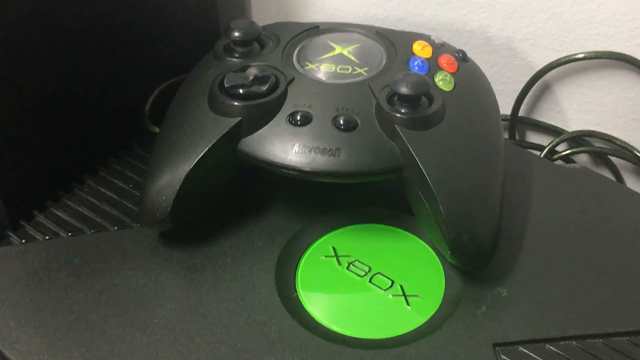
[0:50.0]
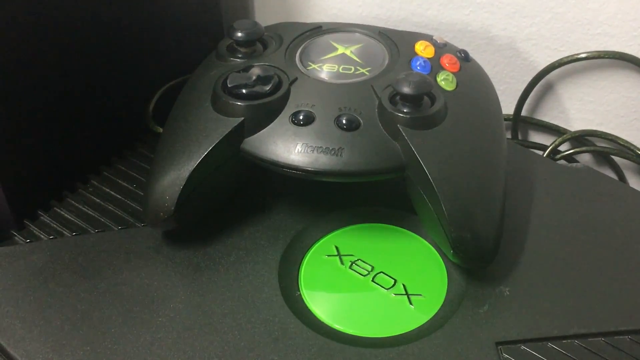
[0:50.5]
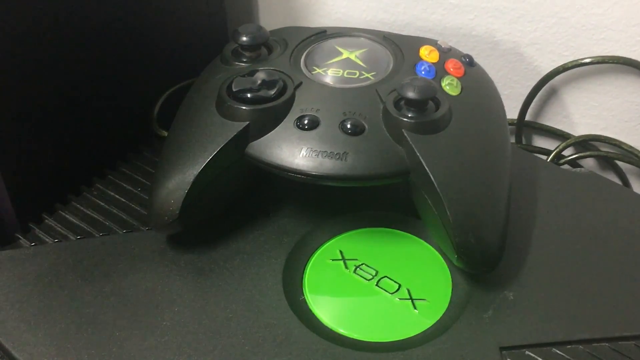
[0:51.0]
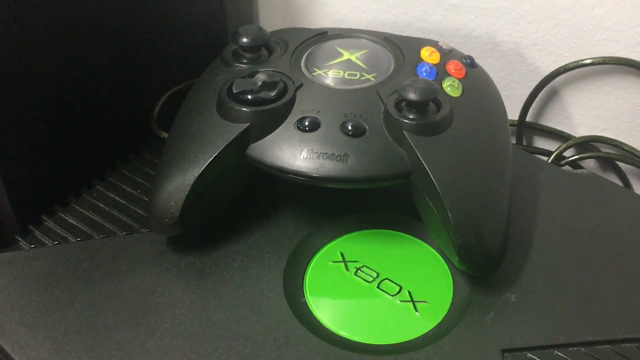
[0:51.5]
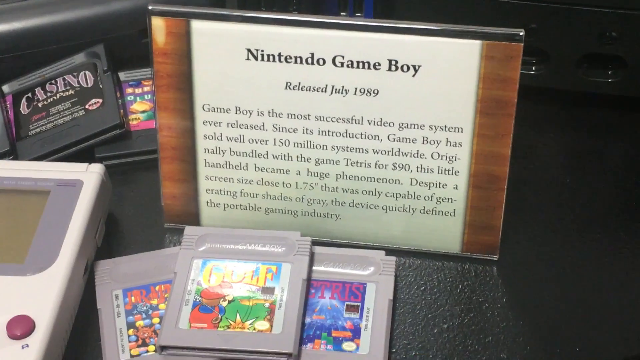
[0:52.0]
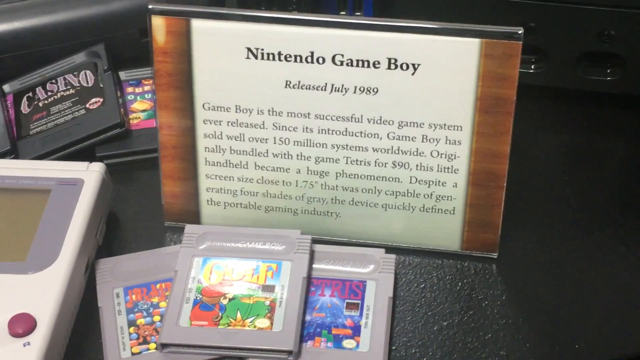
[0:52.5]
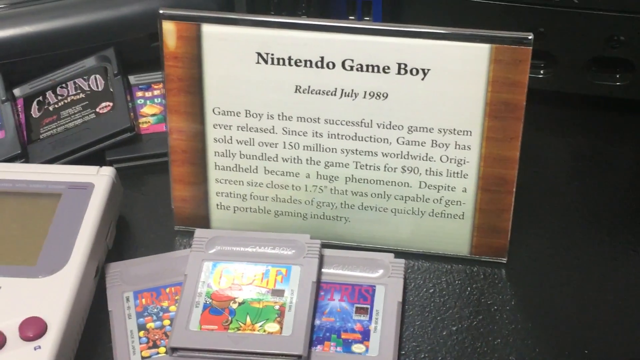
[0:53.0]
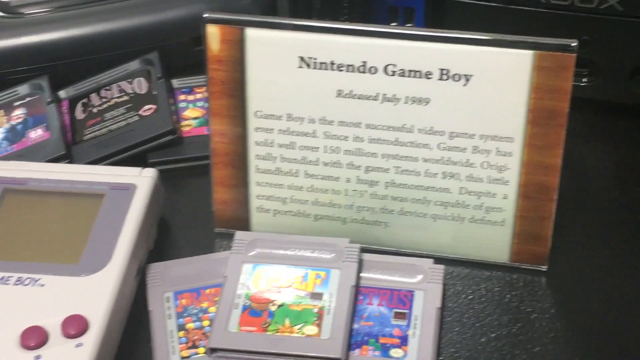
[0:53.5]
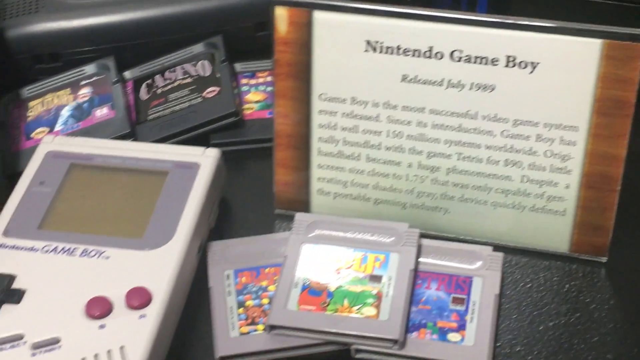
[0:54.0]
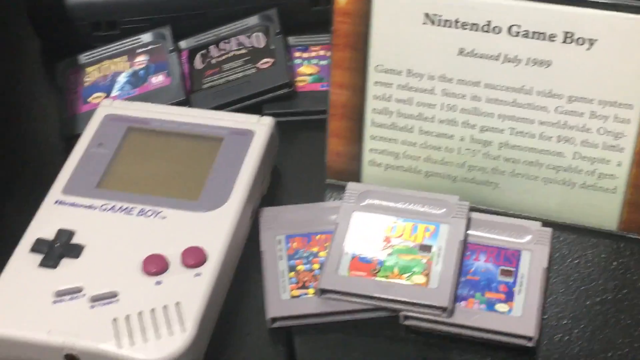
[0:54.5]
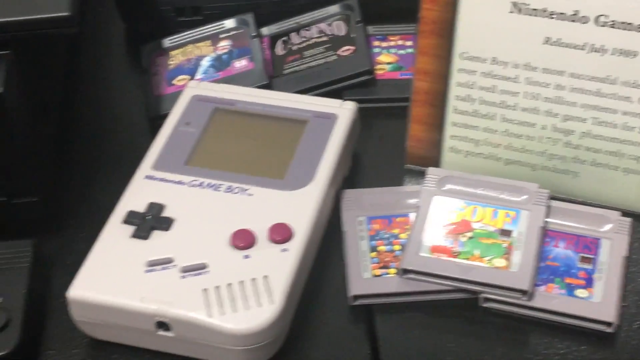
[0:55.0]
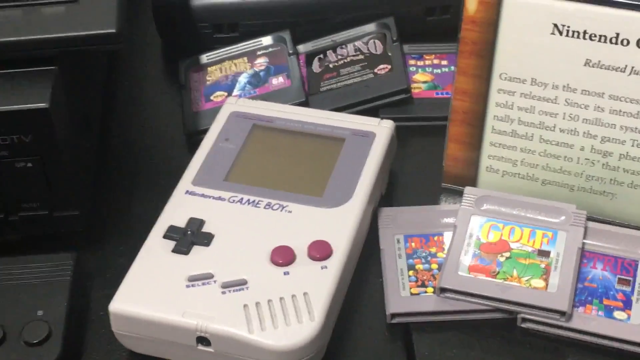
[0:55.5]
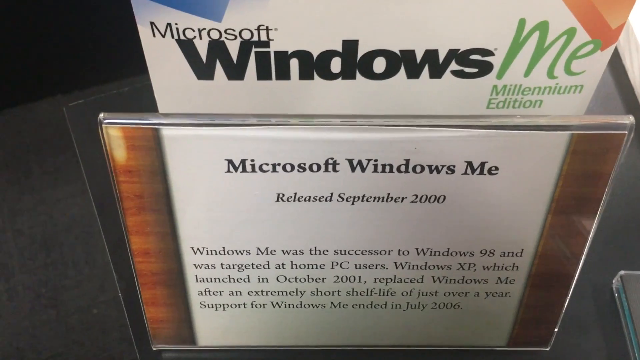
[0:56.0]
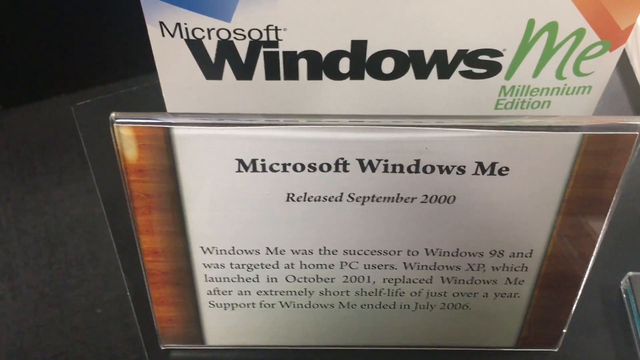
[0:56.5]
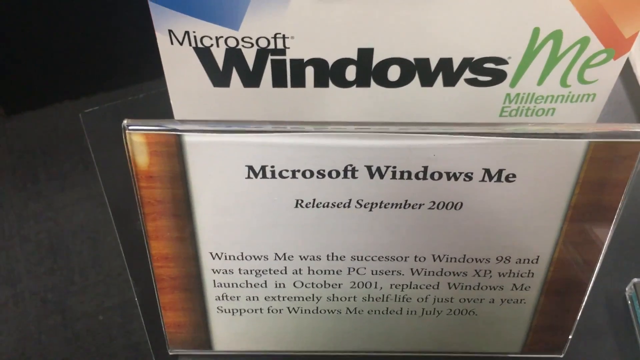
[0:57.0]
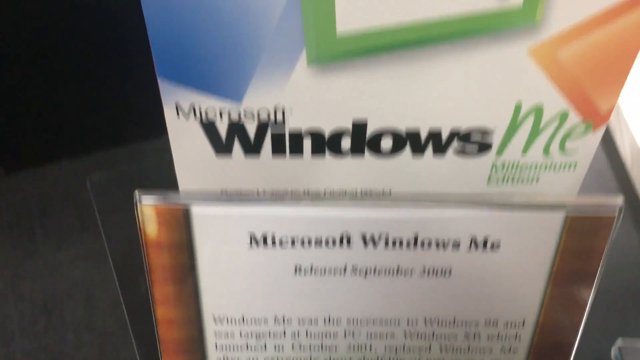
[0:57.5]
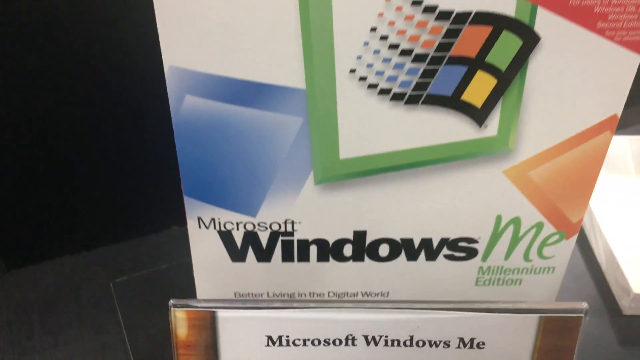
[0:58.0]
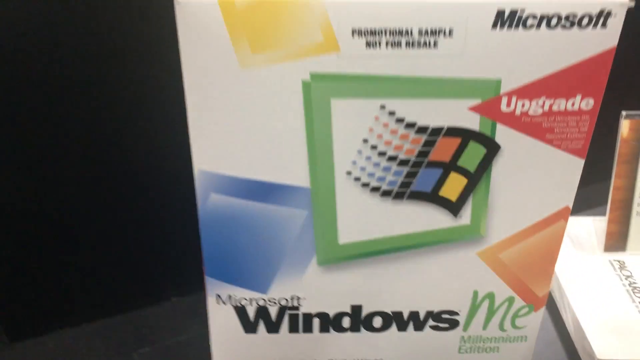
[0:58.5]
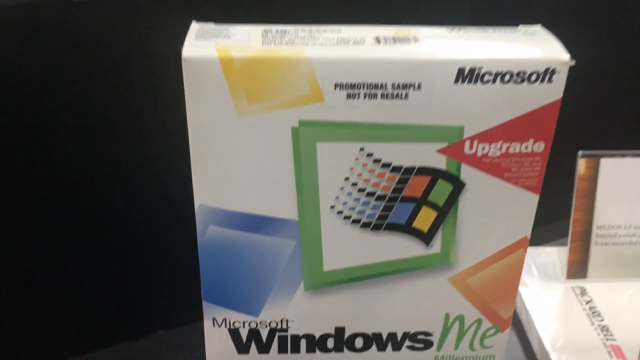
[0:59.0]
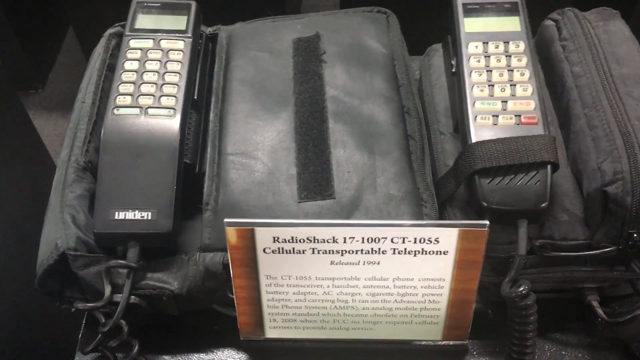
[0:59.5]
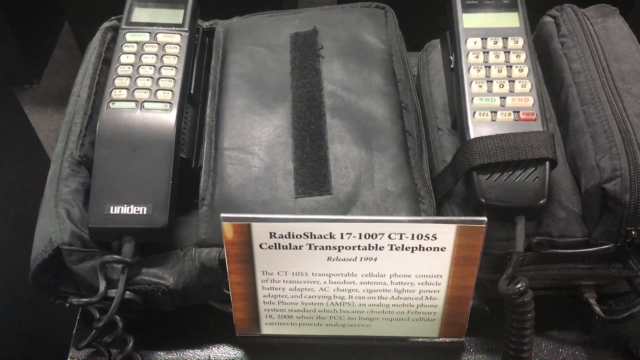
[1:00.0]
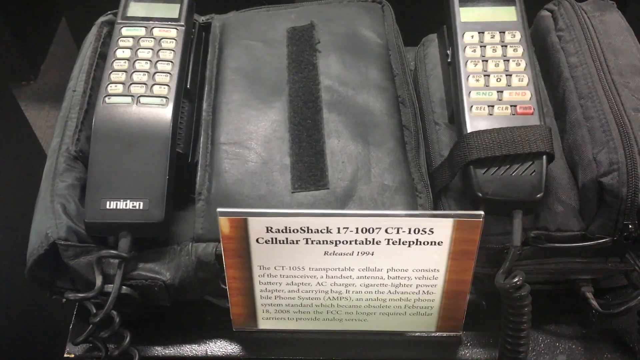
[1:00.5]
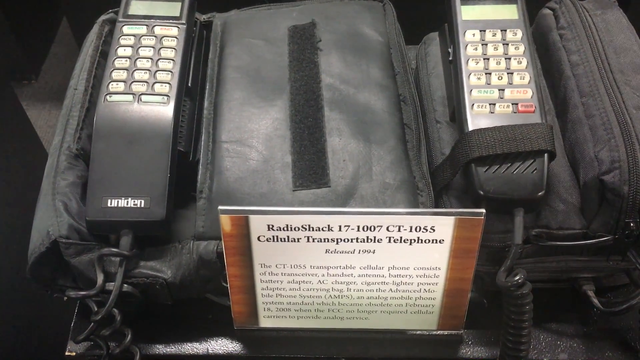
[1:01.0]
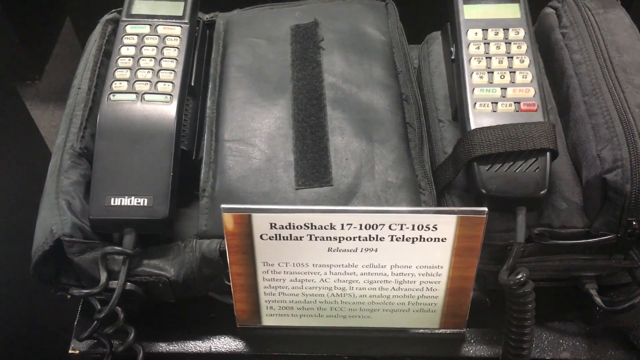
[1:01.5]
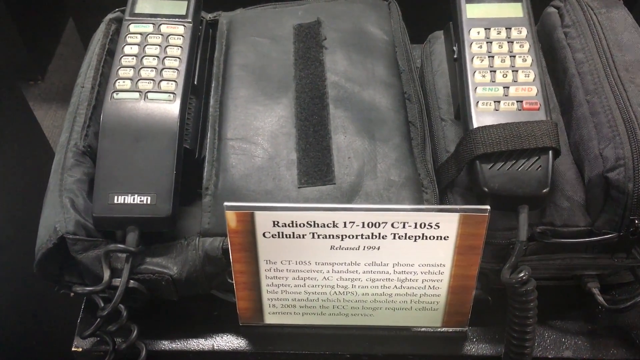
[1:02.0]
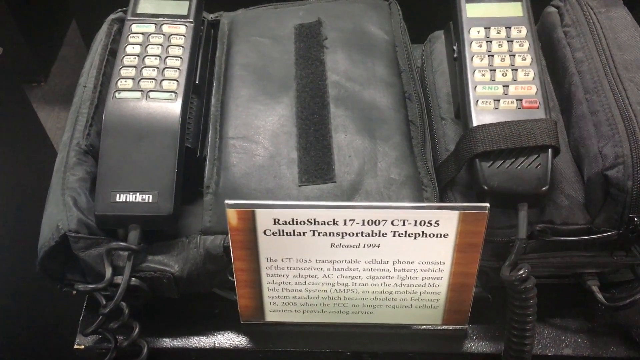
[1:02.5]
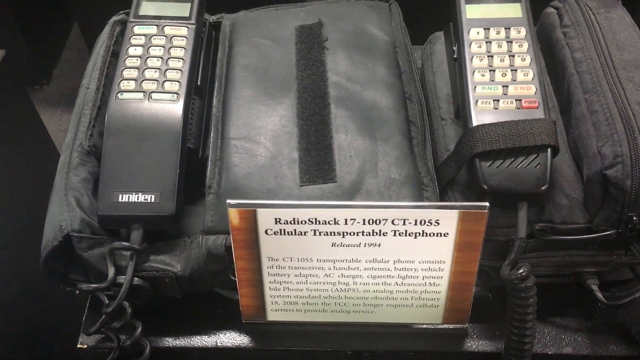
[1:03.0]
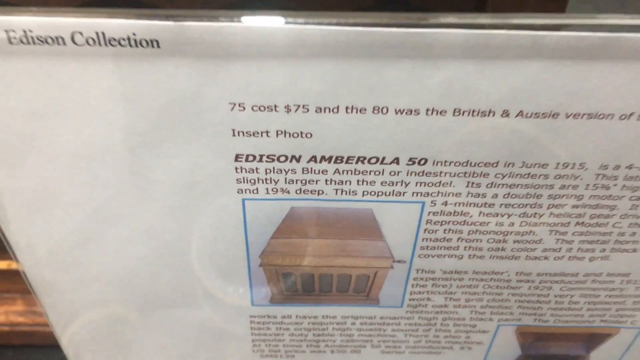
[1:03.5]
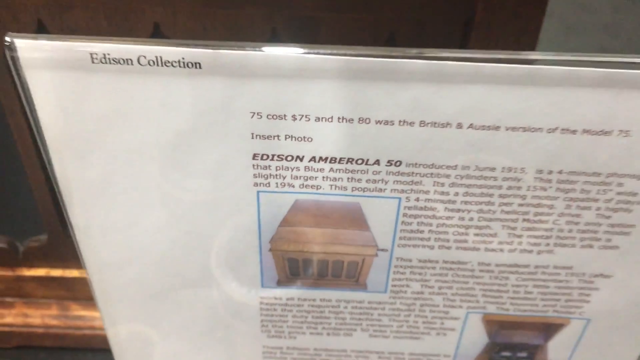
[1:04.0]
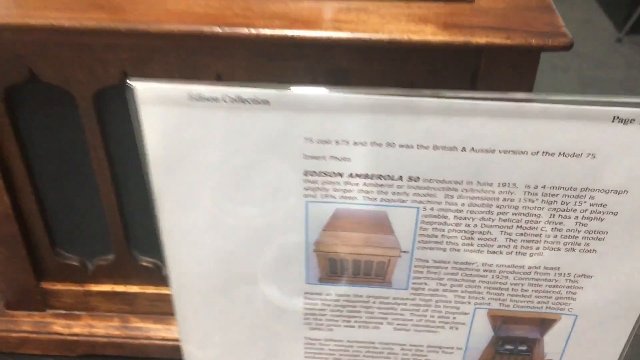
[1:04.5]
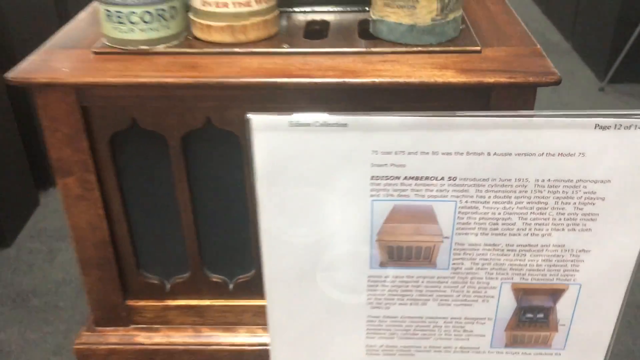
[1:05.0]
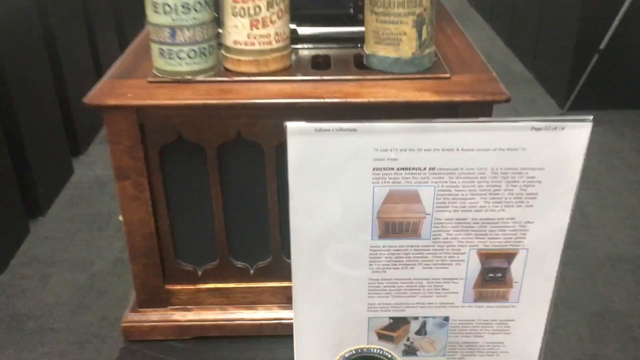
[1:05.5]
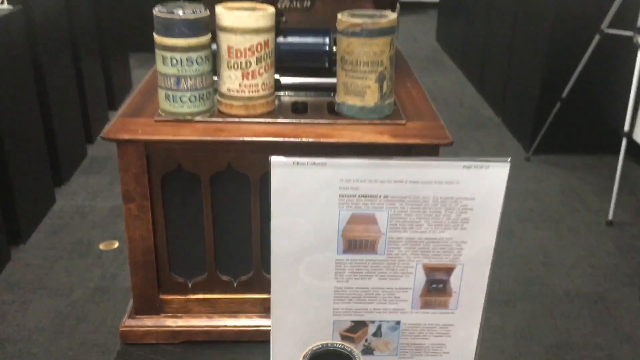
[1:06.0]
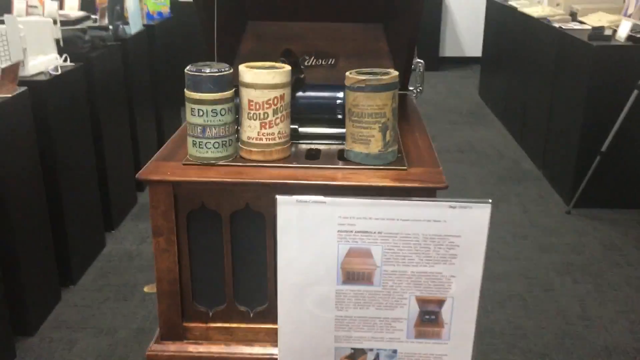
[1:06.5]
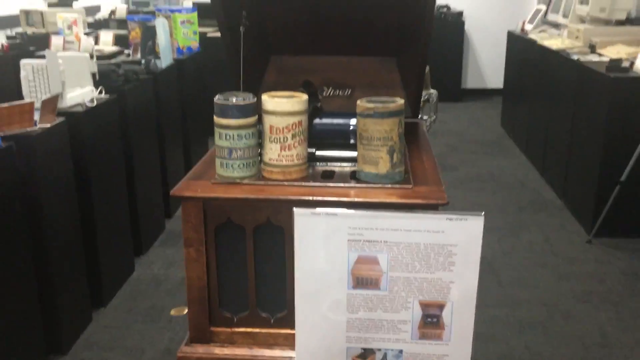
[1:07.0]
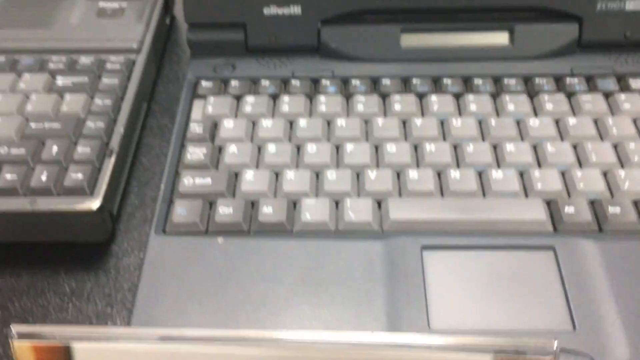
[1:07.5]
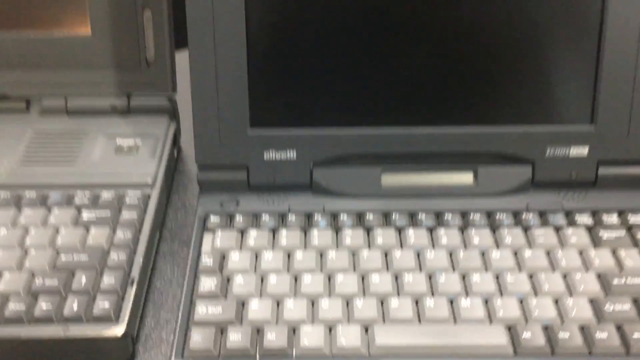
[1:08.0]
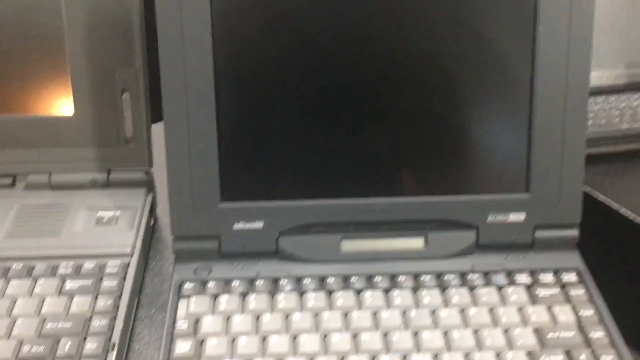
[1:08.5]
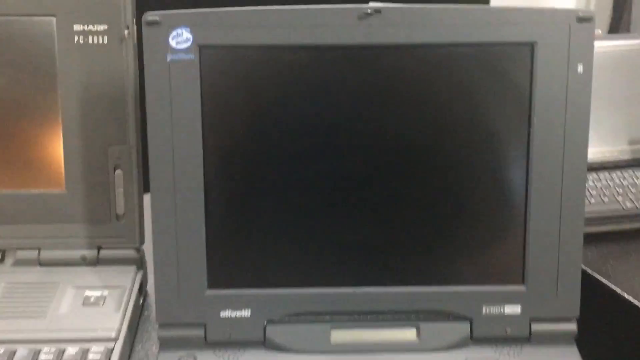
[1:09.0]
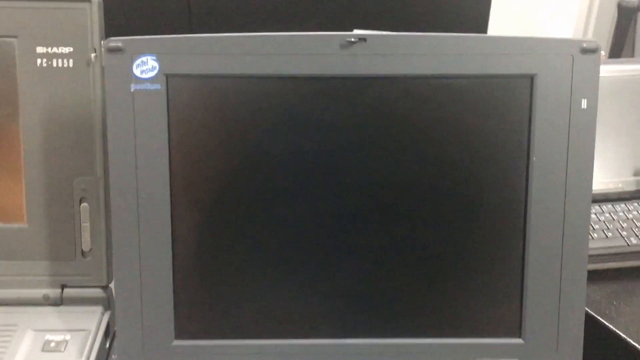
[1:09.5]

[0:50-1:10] A gaming console named 800X appears, followed by Microsoft Windows Me and a RadioShark 17107CT, along with a lot of machinery from older times. One item seems to be a monitor; another seems to be a small computer or laptop, or possibly a gaming device. The museum shows old machinery and technology such as televisions, radios and sound systems.